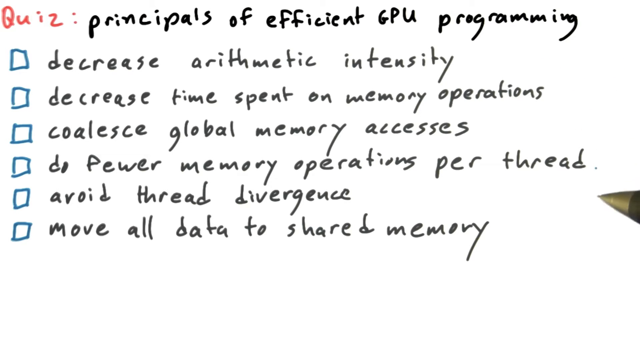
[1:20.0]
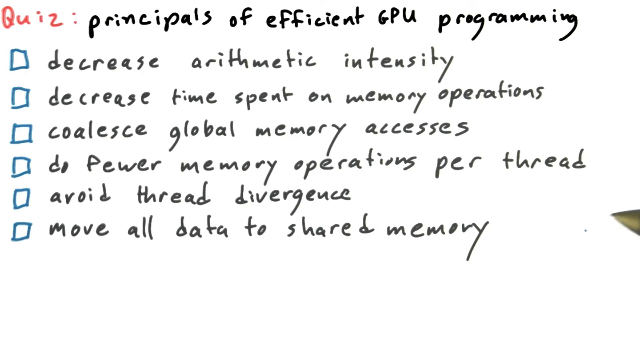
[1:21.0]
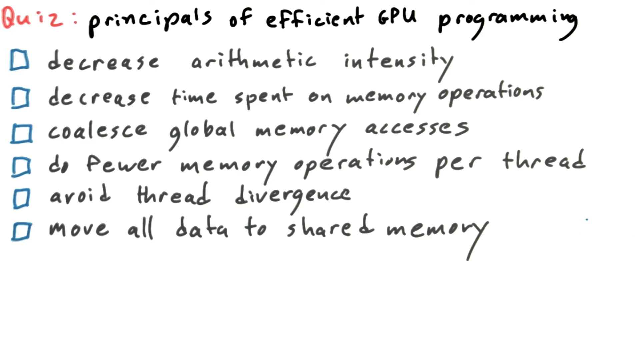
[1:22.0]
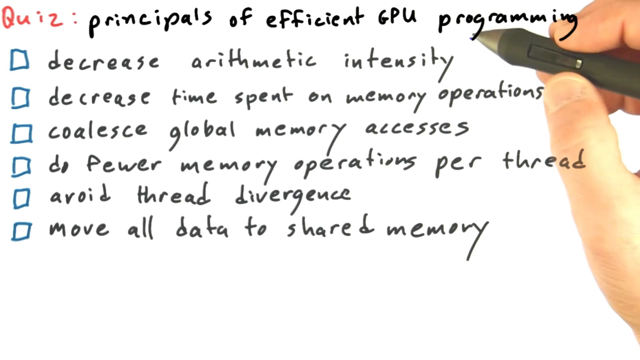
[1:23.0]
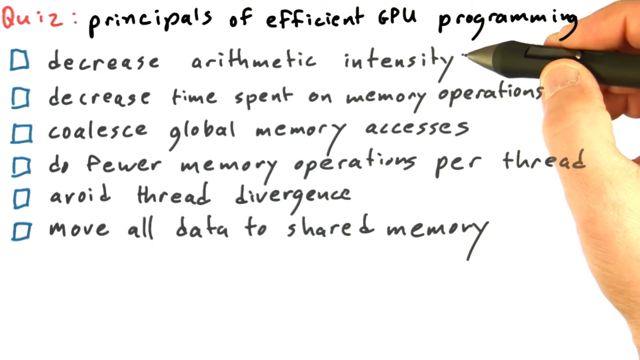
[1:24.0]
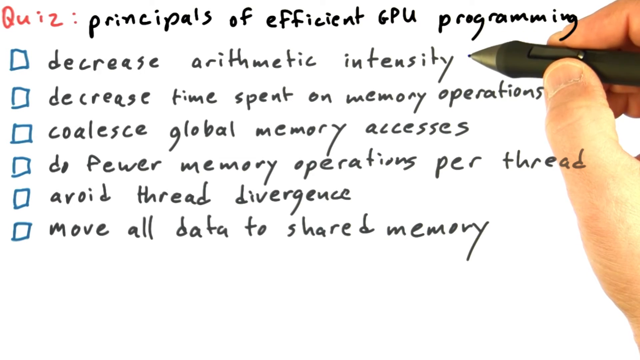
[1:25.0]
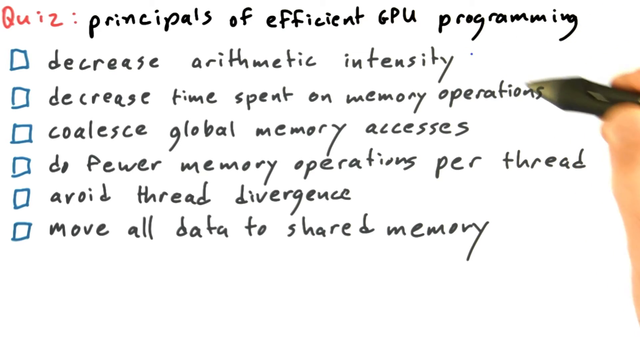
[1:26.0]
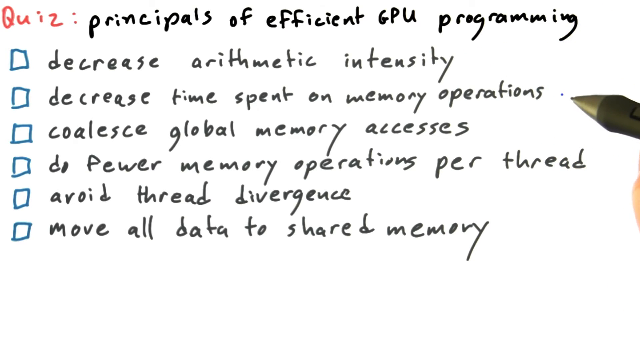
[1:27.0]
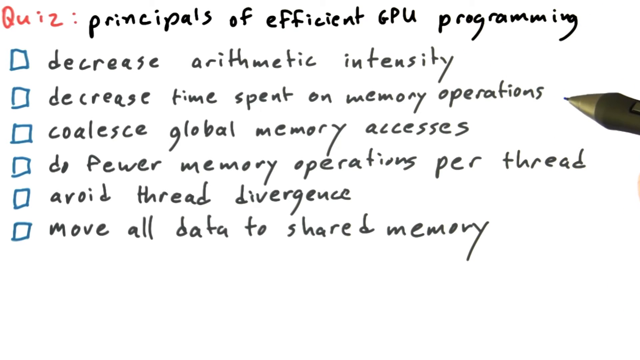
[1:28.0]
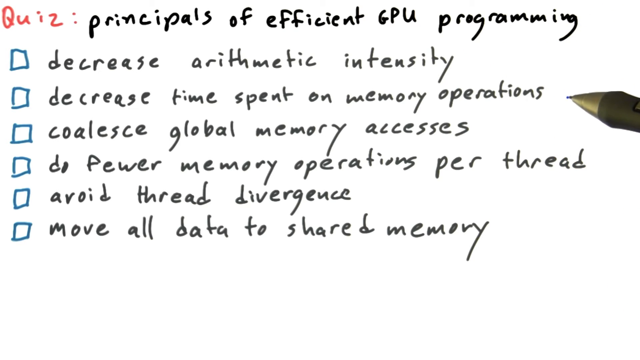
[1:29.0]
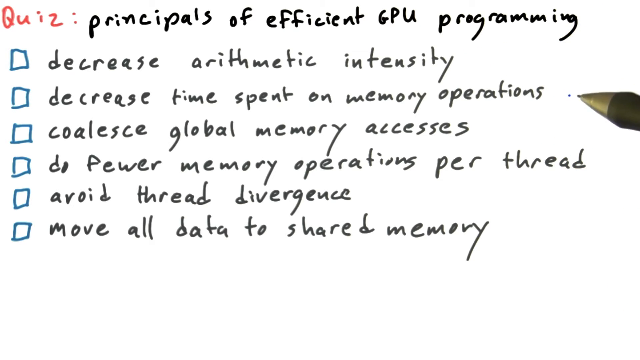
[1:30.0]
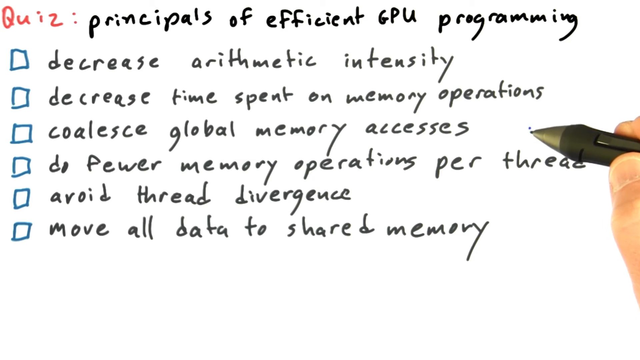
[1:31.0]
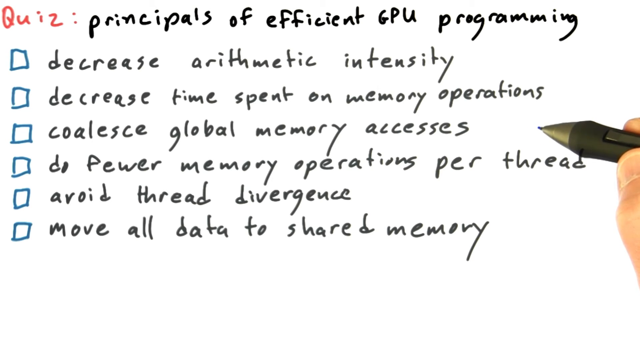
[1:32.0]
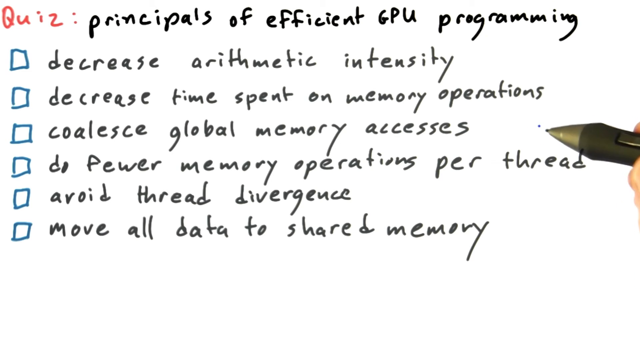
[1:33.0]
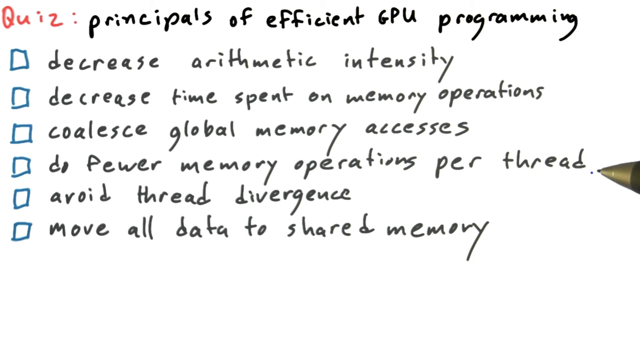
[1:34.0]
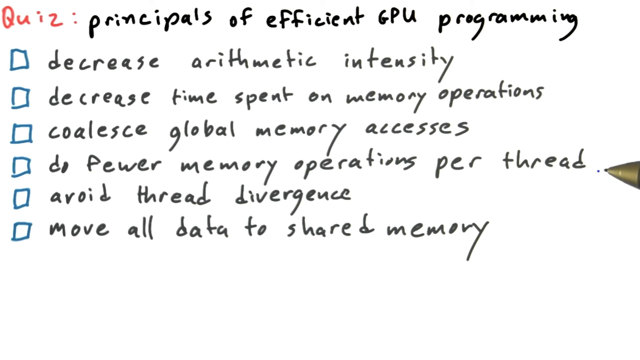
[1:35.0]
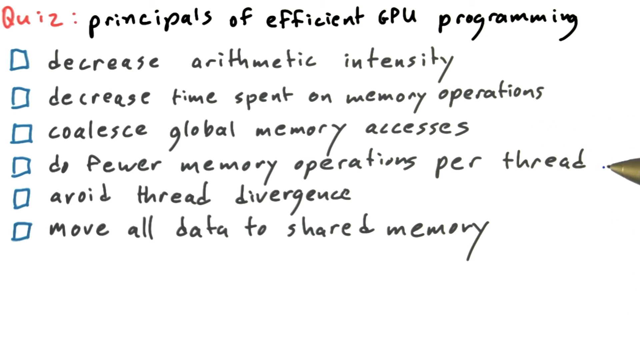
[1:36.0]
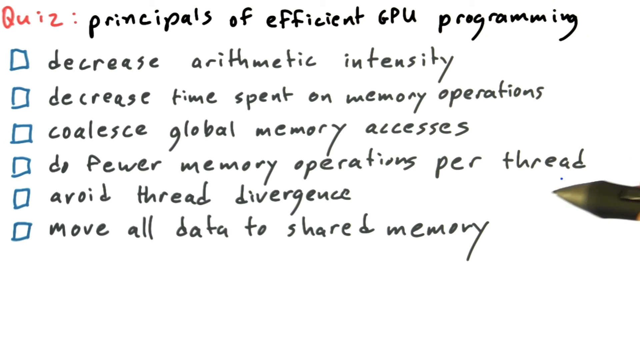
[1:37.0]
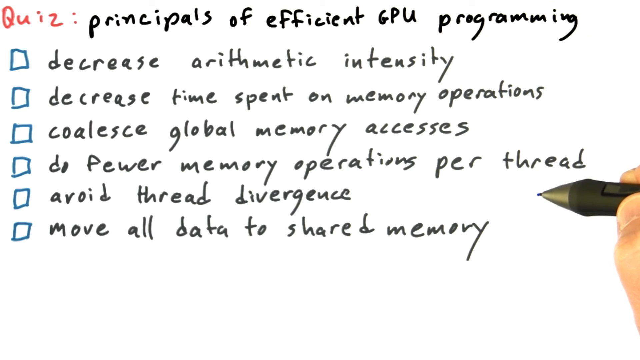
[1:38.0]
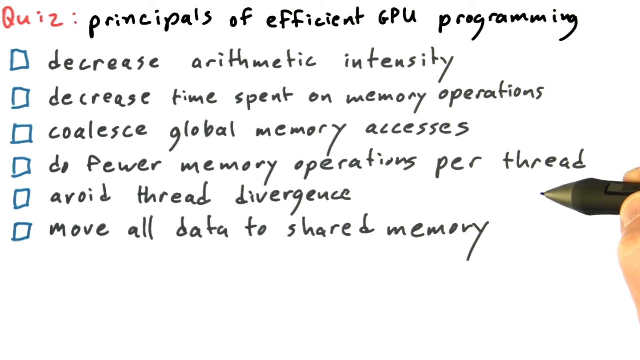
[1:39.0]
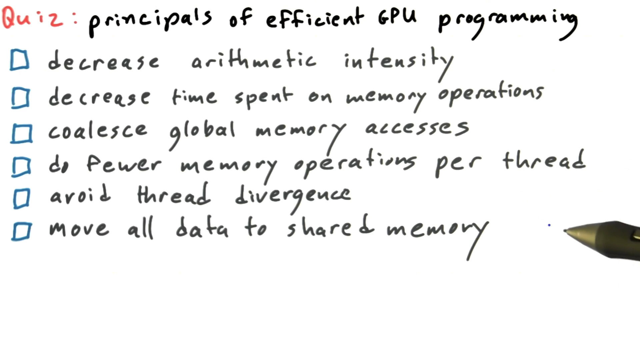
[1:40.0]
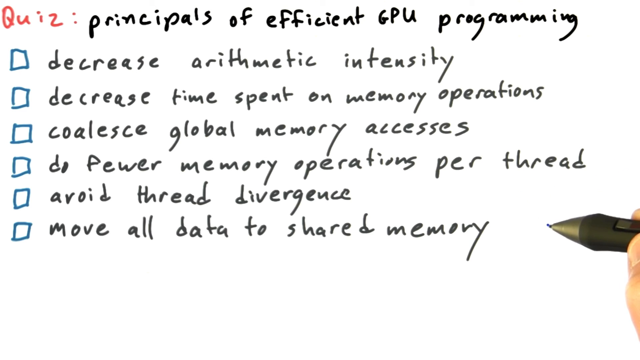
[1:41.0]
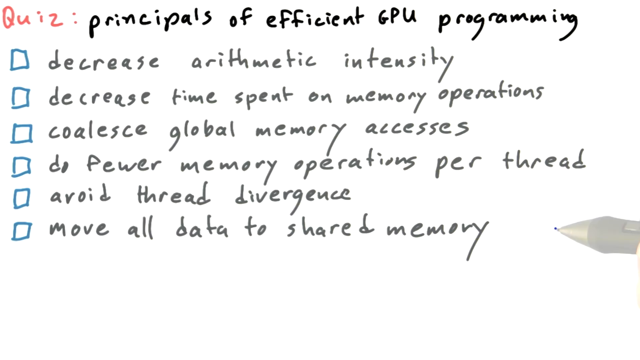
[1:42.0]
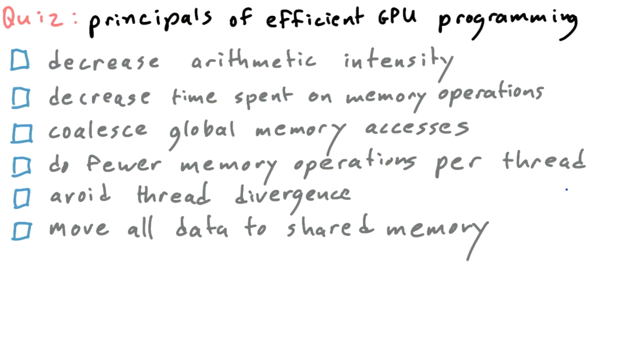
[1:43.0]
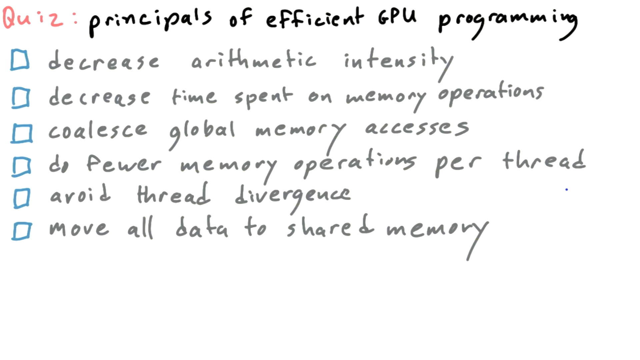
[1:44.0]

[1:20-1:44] The screen changes to a full page of writing with seven lines. The first line is the same as before: red writing reading "quiz" in the top left-hand corner, followed in black by "principles of efficient GPU programming". Below it are six square blue boxes, one underneath the other, each marking a different line. To the right of the boxes, the lines read "decrease arithmetic intensity", "decrease time spent on memory operations", "coalesce global memory accesses", "do fewer memory operations per thread", "avoid thread divergence" and "move all data to shared memory". The pen reappears on the right-hand side of the screen, hovering over the word "operations", and is then moved down to the bottom right-hand corner, where only the thumb and a finger holding the pen are visible.